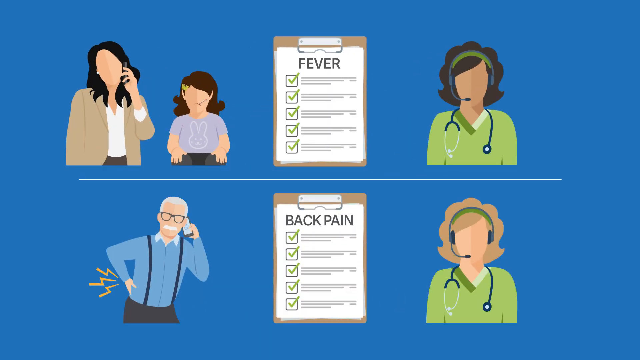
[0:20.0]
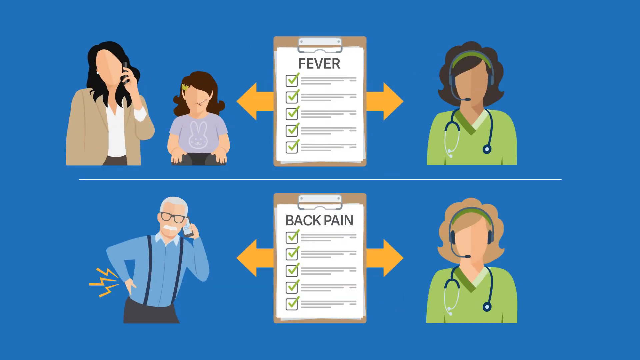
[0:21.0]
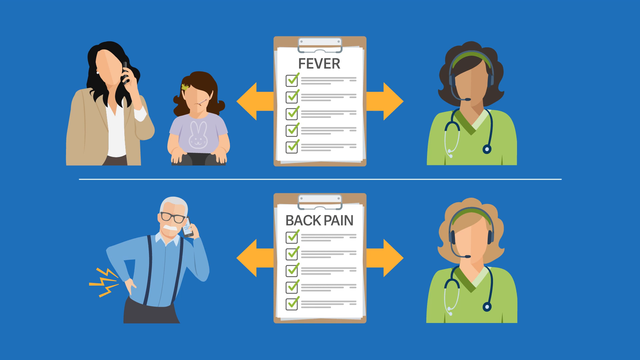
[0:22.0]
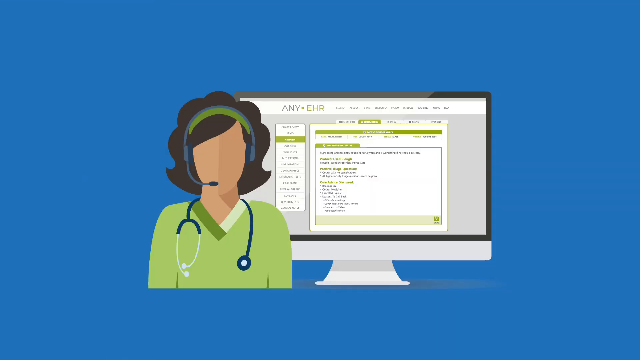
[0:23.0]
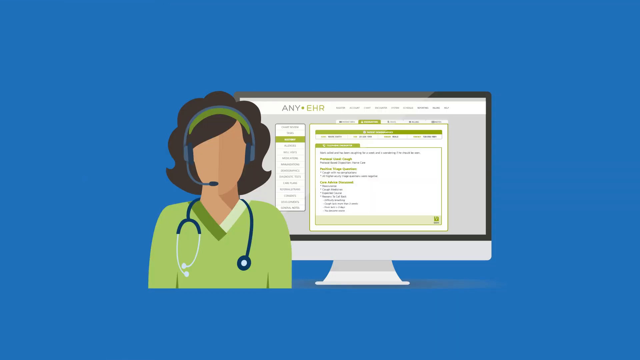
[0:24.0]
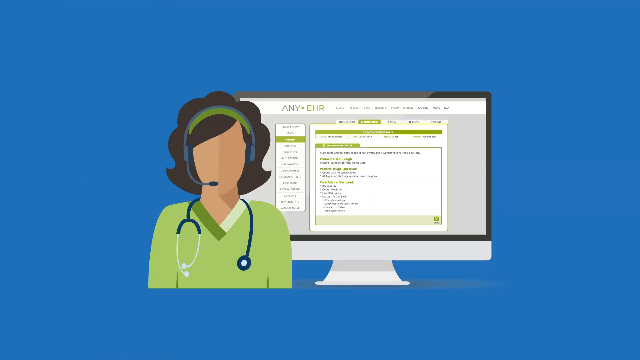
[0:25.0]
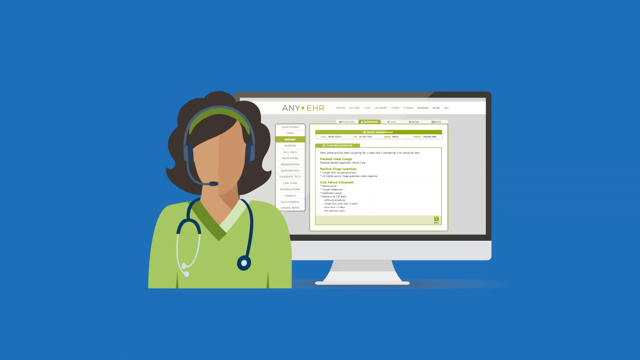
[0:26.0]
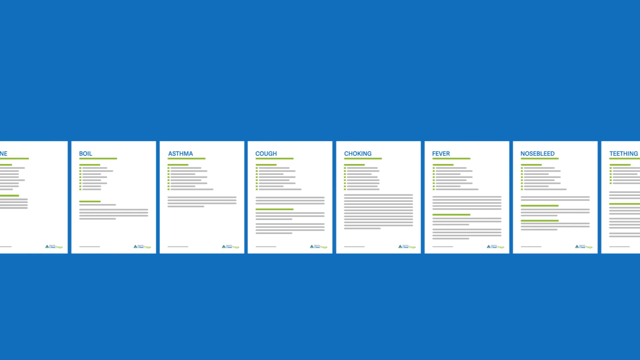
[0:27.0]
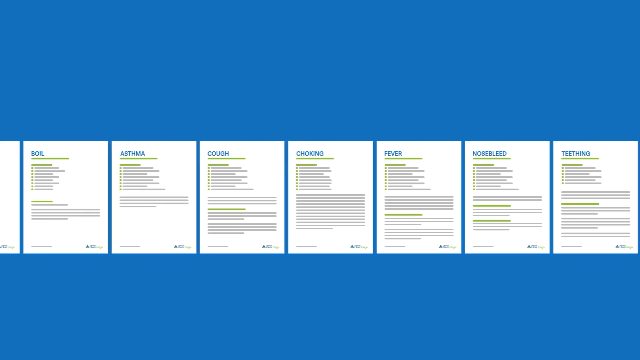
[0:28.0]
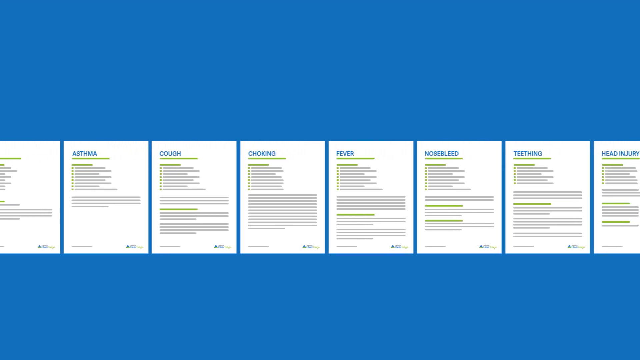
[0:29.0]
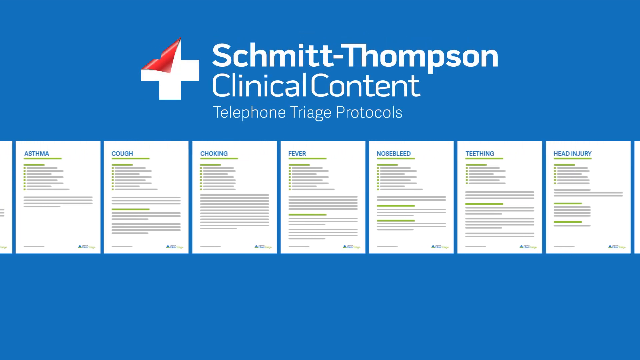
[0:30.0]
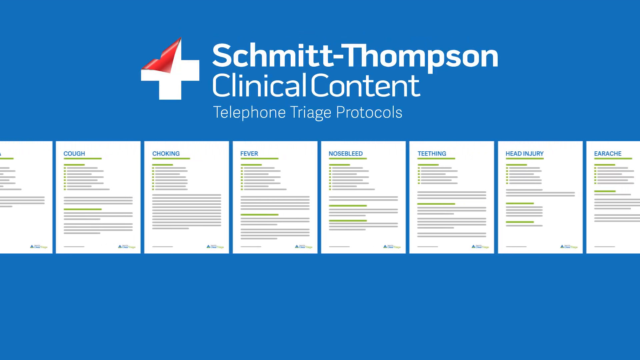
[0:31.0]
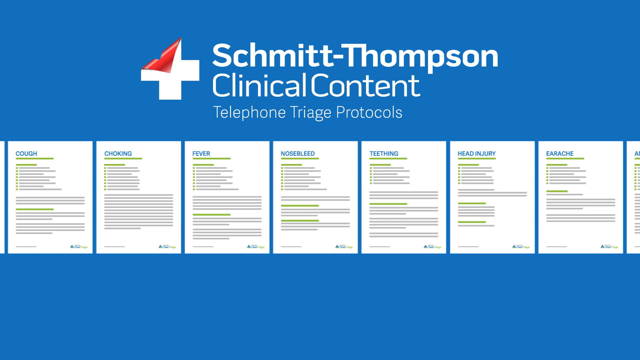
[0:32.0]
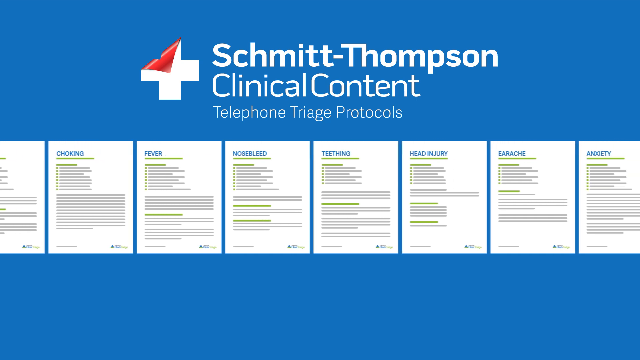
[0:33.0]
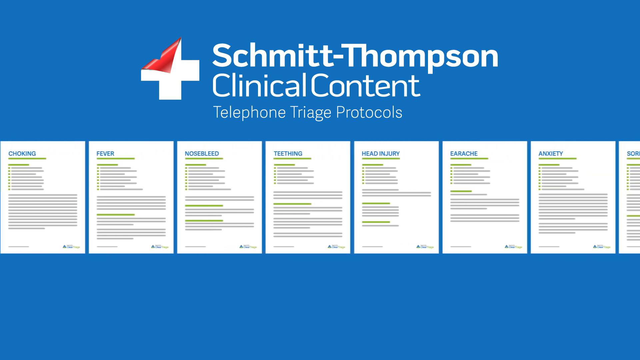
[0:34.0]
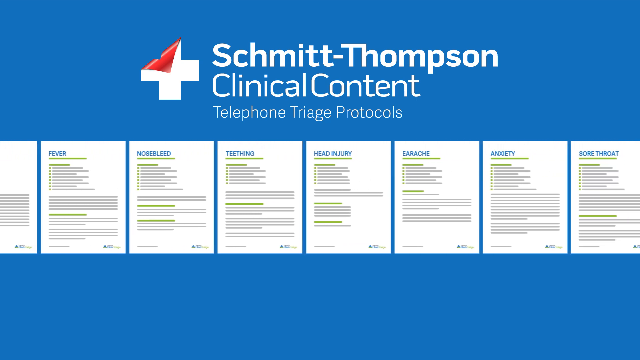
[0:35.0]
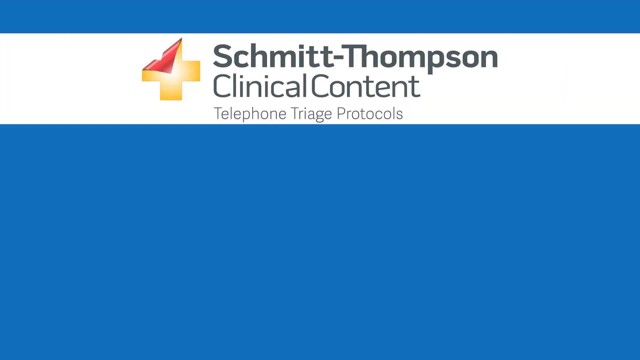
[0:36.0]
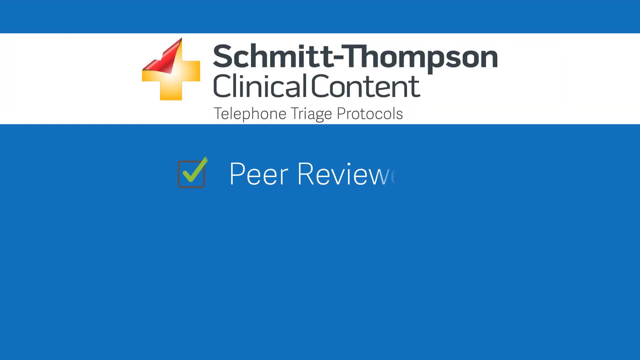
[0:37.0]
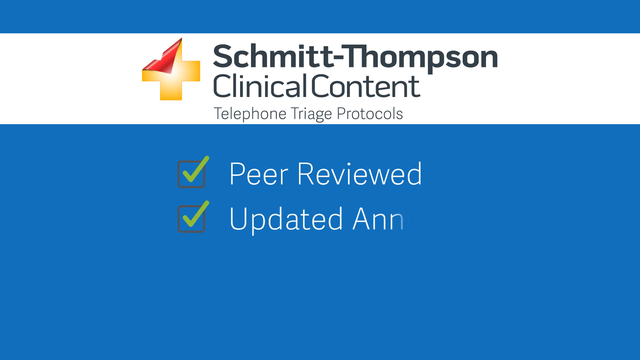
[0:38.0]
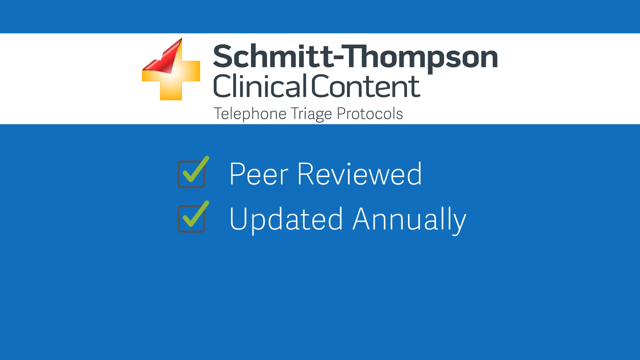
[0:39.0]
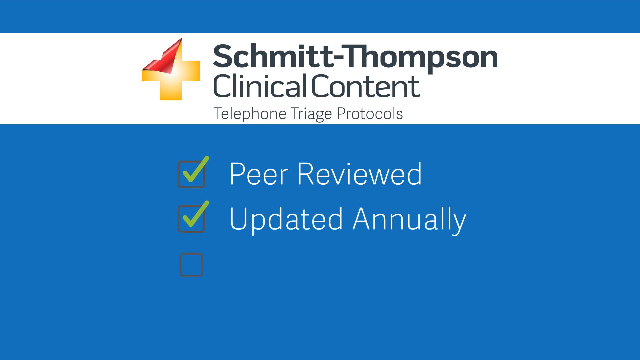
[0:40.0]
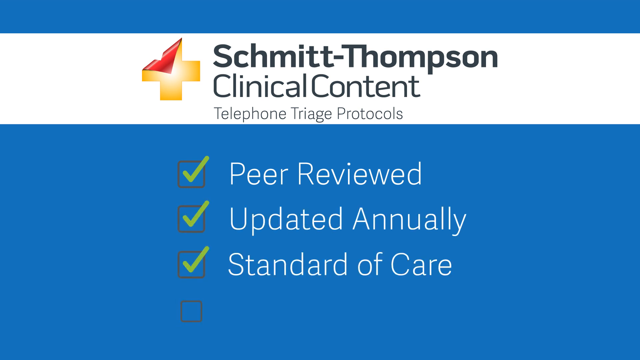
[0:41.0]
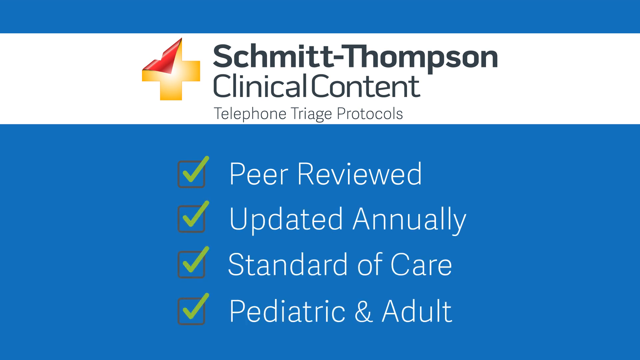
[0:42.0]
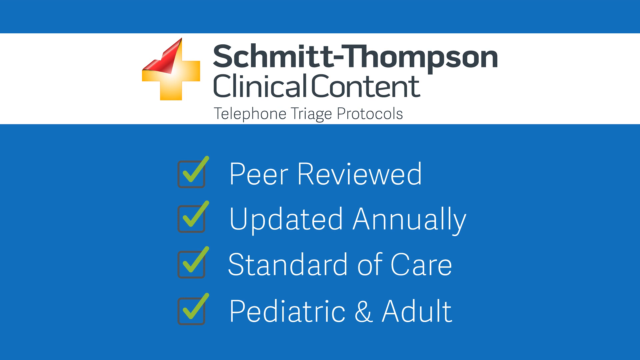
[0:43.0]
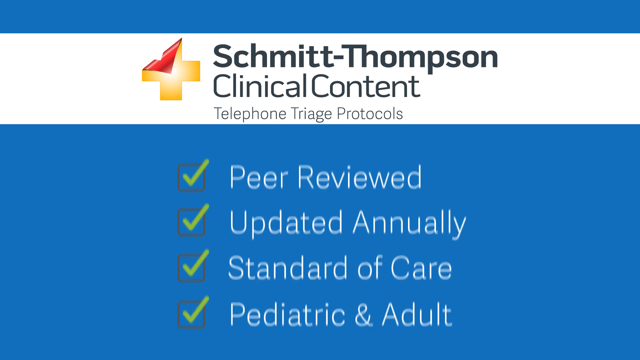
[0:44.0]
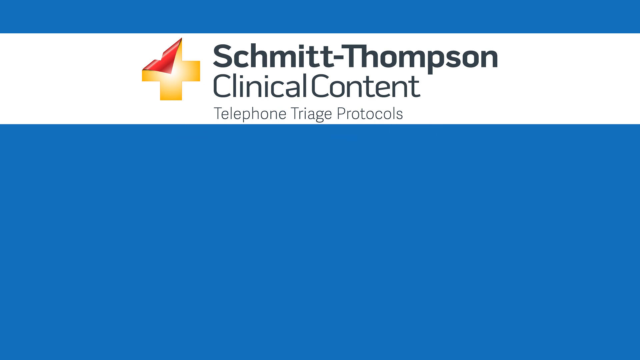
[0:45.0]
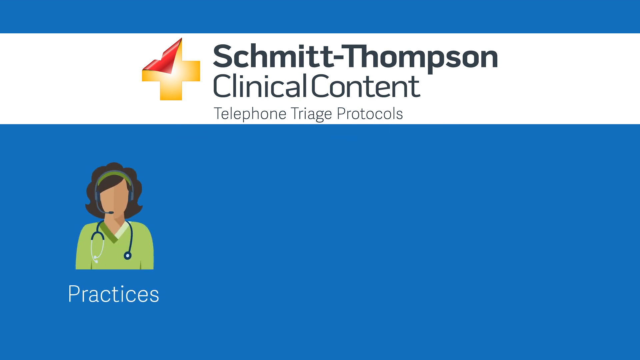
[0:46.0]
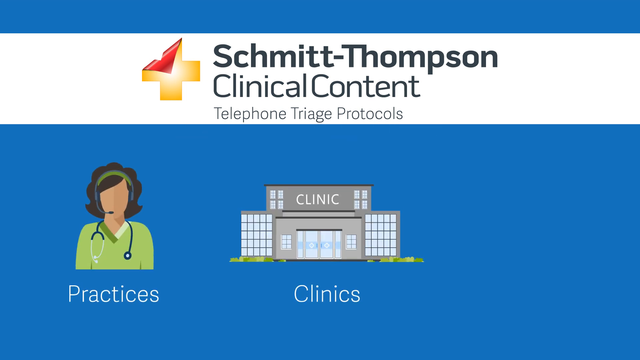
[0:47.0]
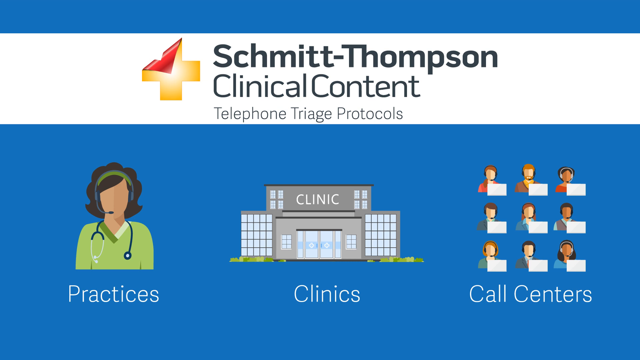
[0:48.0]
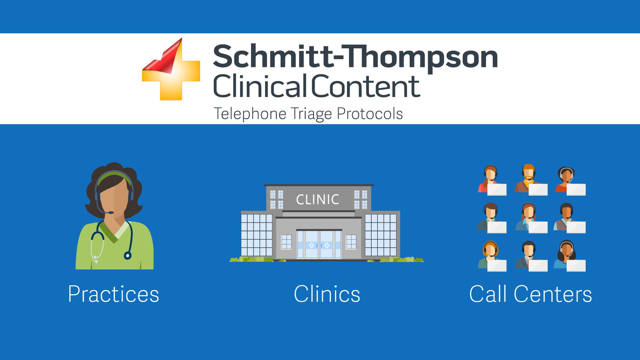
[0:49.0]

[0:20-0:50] Two clipboards are in the center of the screen, one on top of the other, separated by a white line. On the left side of the top clipboard is an illustration of a faceless woman in a brown jacket, a white shirt and brown pants, who is on the phone. To her right is a woman who looks like she is sitting, with brown hair, a light purple shirt with a bunny on it and gray pants. To the right of the clipboard is a woman wearing a headset, with a stethoscope around her neck and a green v-neck shirt. Yellow lines appear from the clipboard and go to the left, and yellow arrows come from the clipboard going left and right, pointing at the people. The bottom clipboard says "back pain", and beside it is an elderly man with a gray mustache, gray beard and glasses, wearing a blue shirt with suspenders and brown pants. He is on the phone, holding it in his left hand, with his right arm bent and his hand on his back, and lightning bolts come out of his back to indicate pain. To the right is a woman in a green shirt wearing a headphone, with a stethoscope around her neck. The scene changes to a drawing of a woman in a green shirt with headphones and a stethoscope, then to a screen of many pieces of paper moving from the right side of the screen to the left, labeled with things like cough, choking, fever, nosebleed, teething, head injury and earache. At the top of the screen it says "Schmidt Thompson clinical content telephone triage protocols". The papers disappear, leaving a blue background with the same title on a white banner at the top. Below it, "peer reviewed" appears, with a gray box containing a green checkmark to its left; three more boxes appear one below another, all receiving checkmarks, and to their right it says "updated annually", "standard of care" and "pediatric and adult". A woman then appears with "practices" below her, and a hospital appears next to her with "clinics" below it.